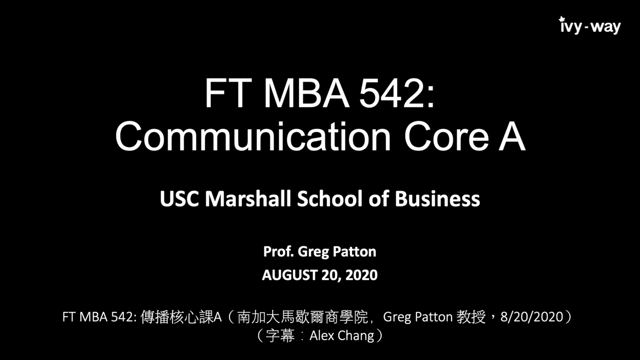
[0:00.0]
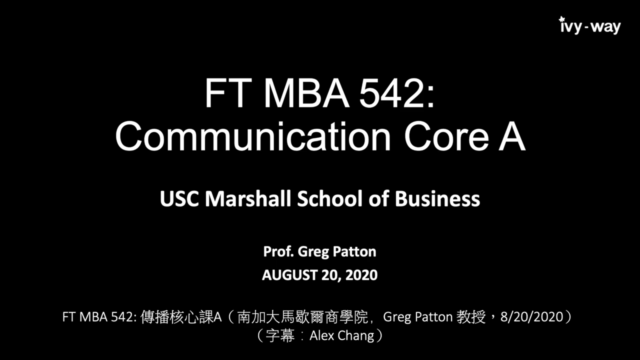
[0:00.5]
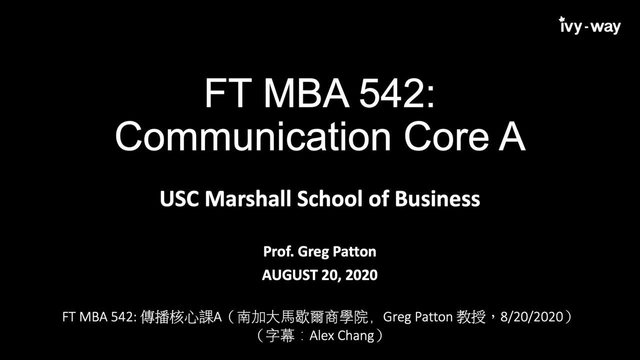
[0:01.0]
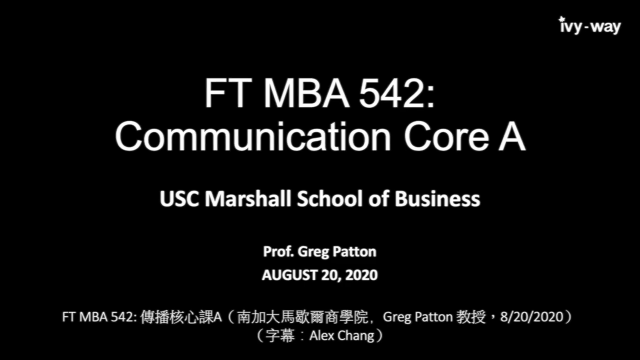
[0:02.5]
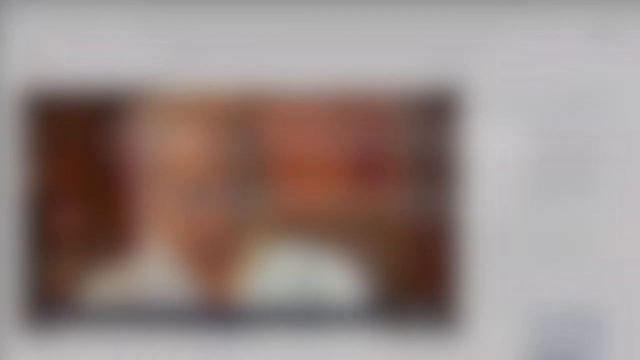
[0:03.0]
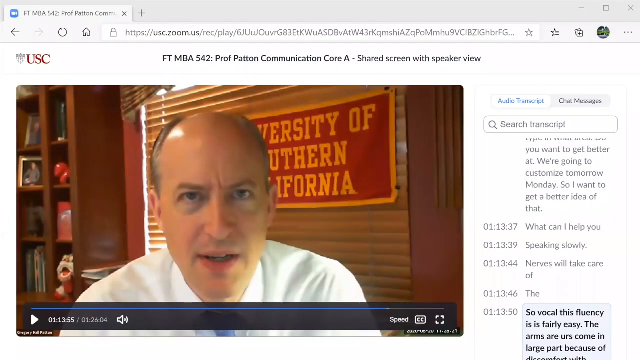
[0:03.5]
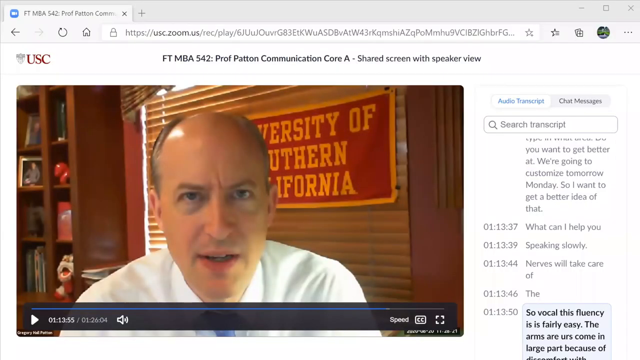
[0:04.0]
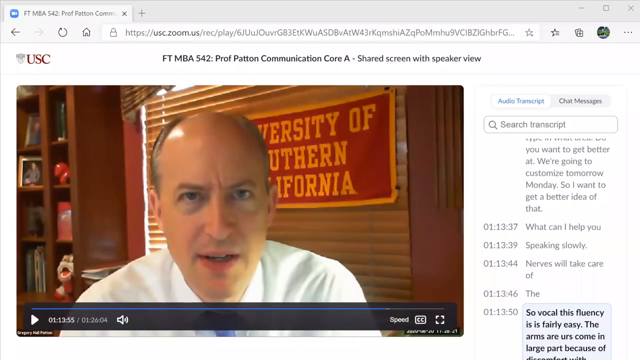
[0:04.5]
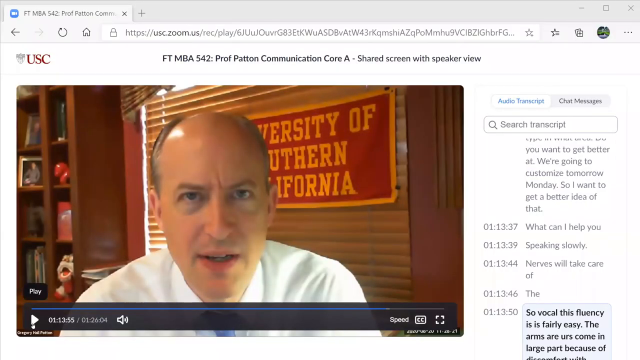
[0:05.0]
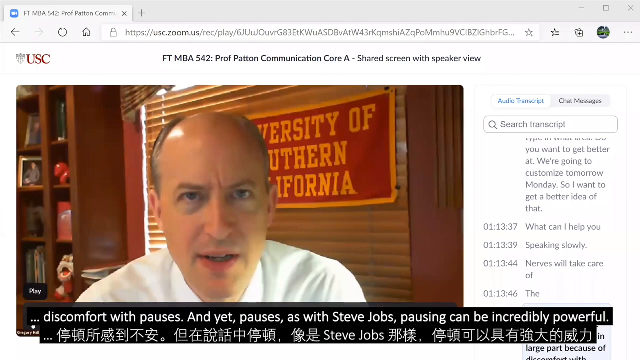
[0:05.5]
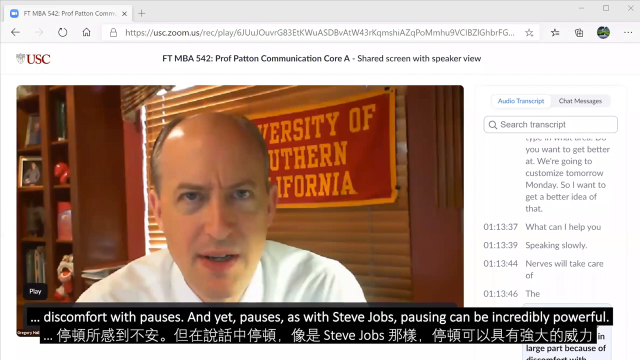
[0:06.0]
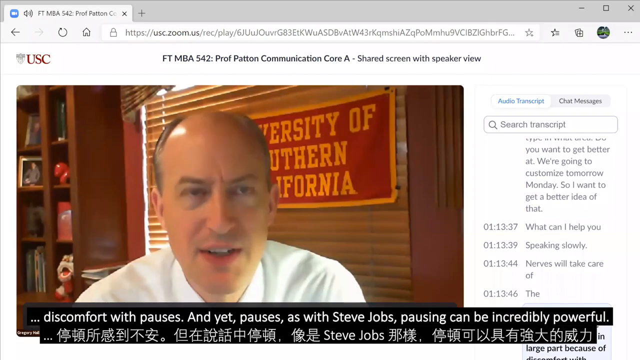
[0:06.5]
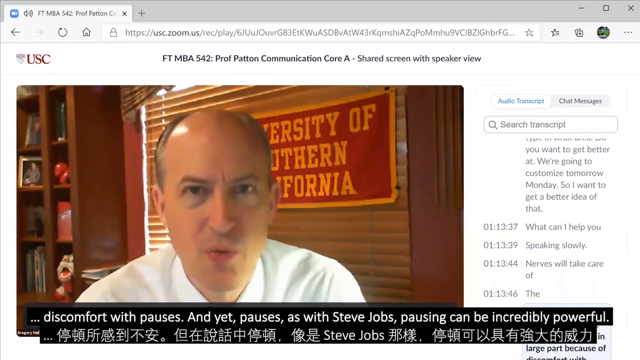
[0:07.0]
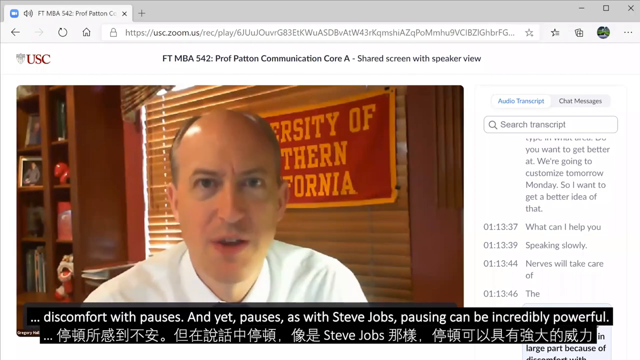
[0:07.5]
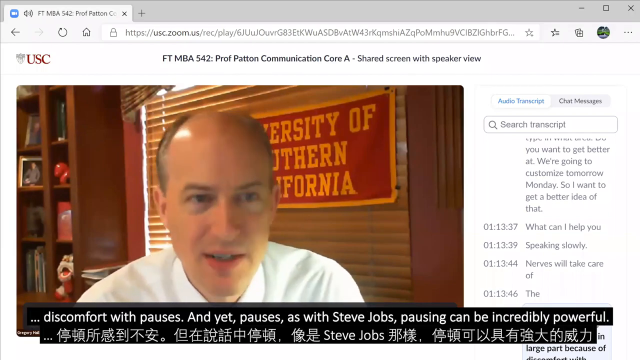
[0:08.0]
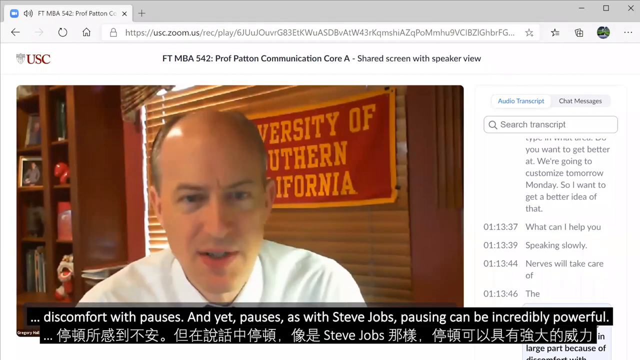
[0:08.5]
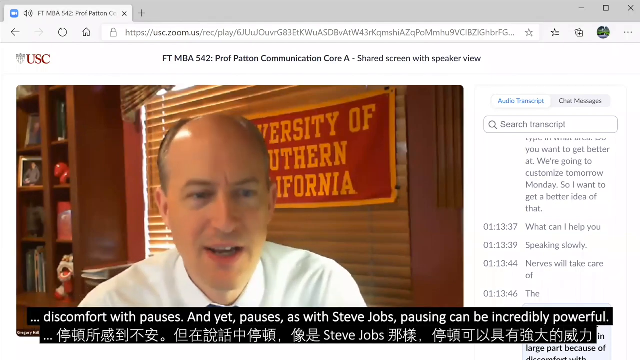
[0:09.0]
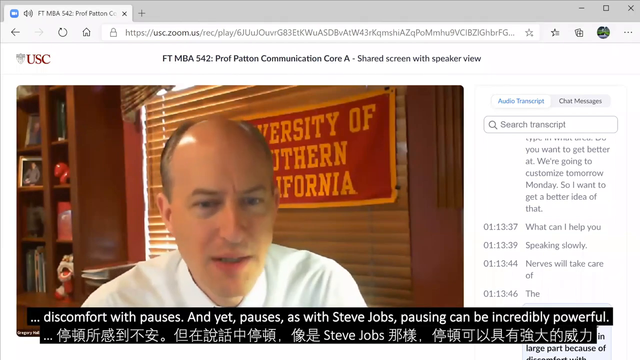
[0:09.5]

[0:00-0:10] A black title page with white writing reads "FT MBA 542 Communication Core A USC Marshall School of Business Professor Greg Patton August the 20th 2020." The screen fades to a website page, most of which is set up with a video screen. On it, a man with a white T-shirt and a very short hairstyle is sitting in front of a flag that says "University of Southern California" and is talking to somebody on the video. The title at the top reads "Professor Patton Communication Core A Shared screen with speaker view." On the left-hand side there is a small icon saying "USC."